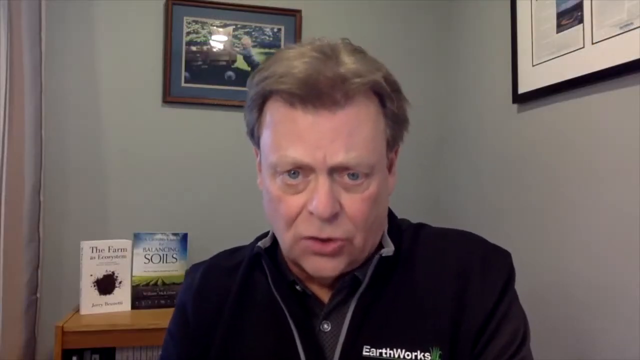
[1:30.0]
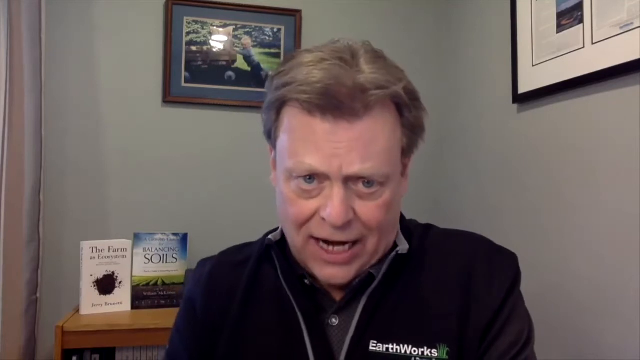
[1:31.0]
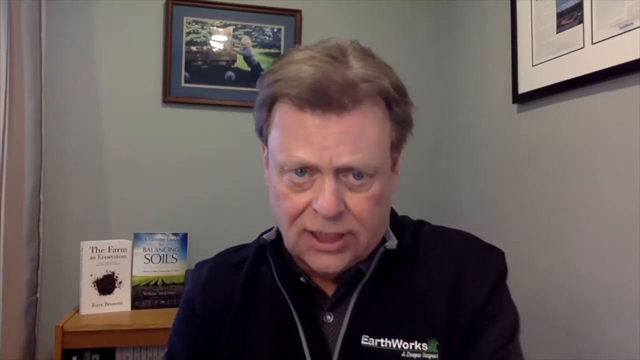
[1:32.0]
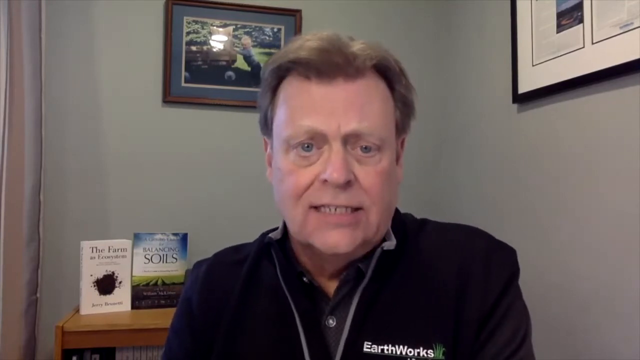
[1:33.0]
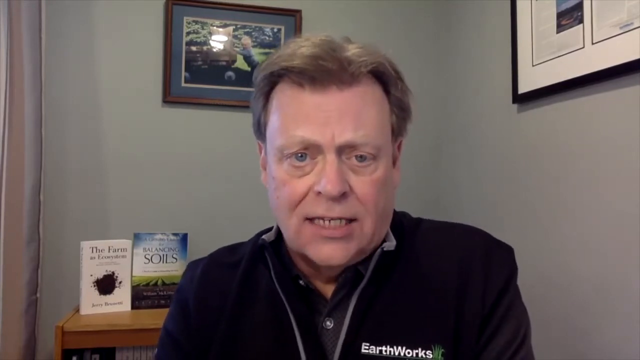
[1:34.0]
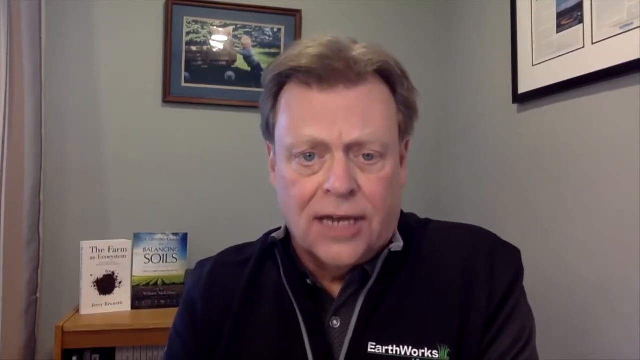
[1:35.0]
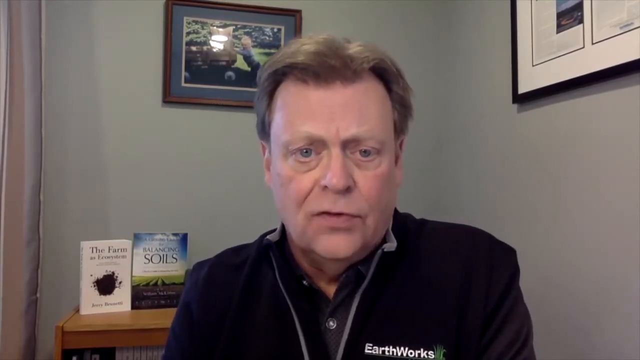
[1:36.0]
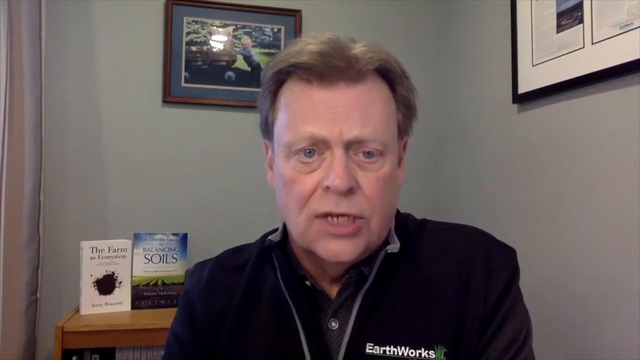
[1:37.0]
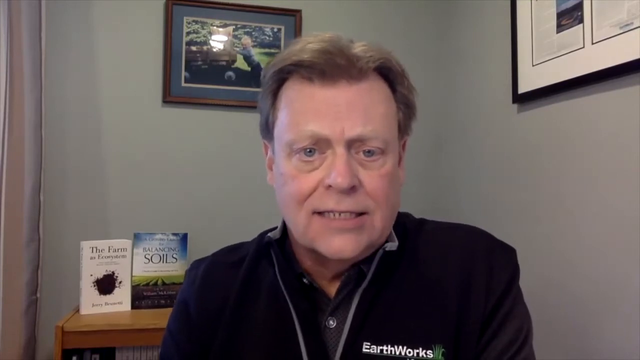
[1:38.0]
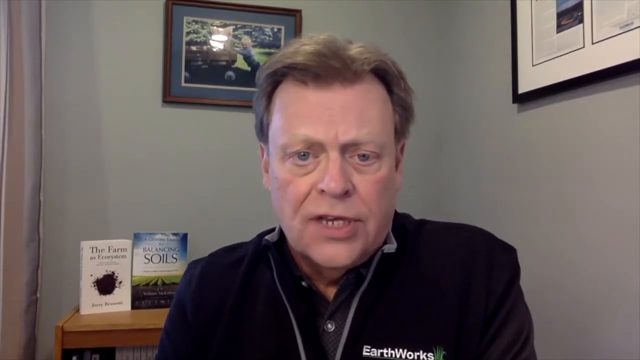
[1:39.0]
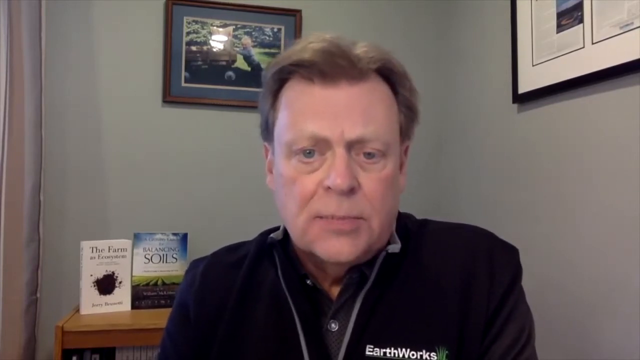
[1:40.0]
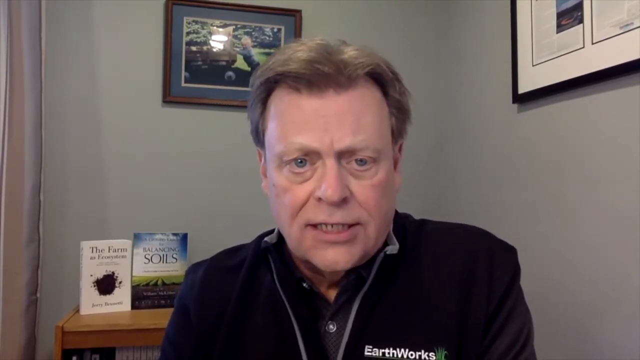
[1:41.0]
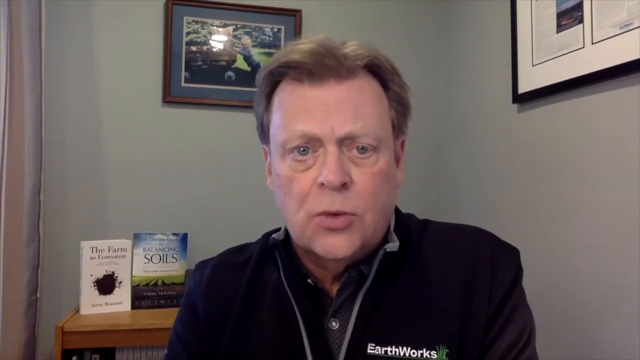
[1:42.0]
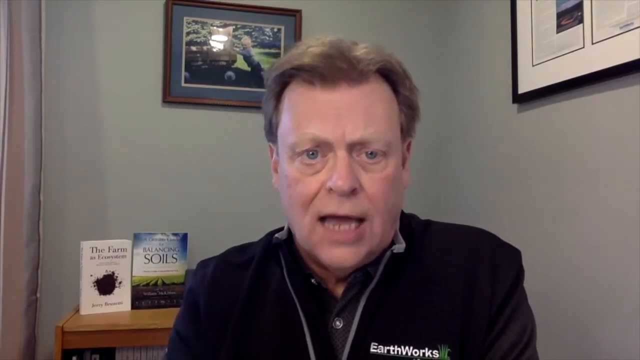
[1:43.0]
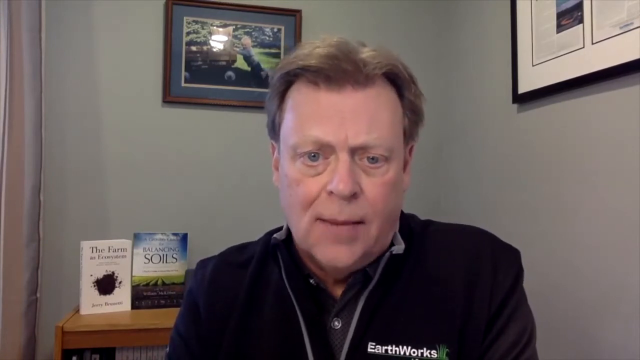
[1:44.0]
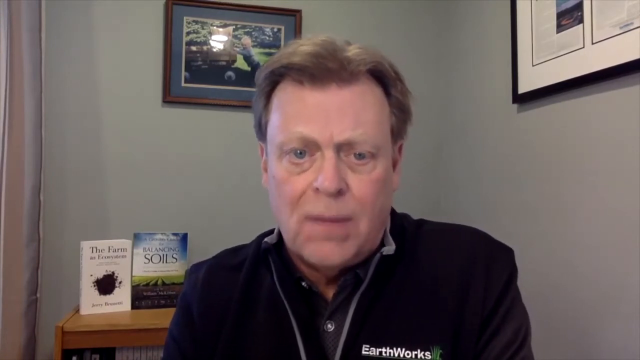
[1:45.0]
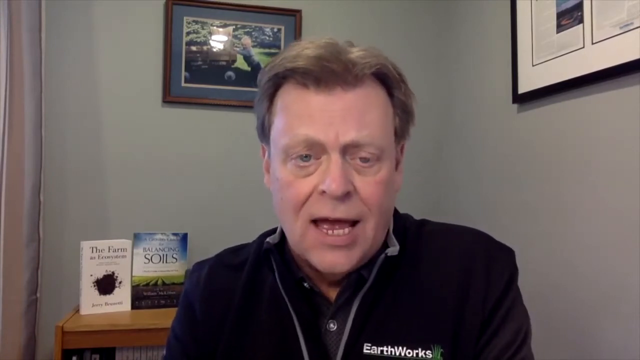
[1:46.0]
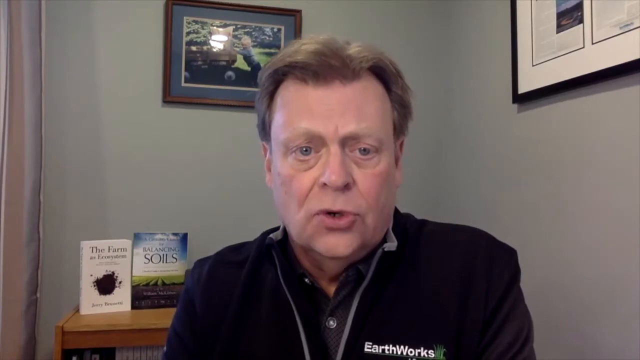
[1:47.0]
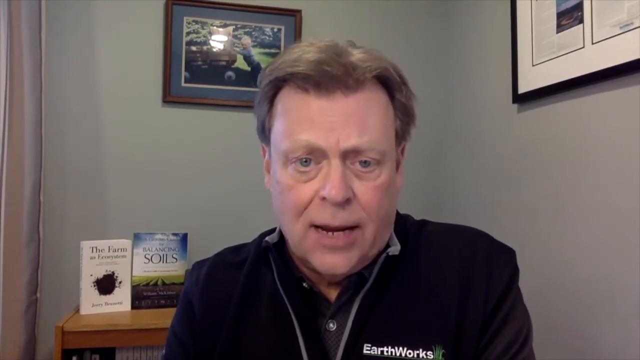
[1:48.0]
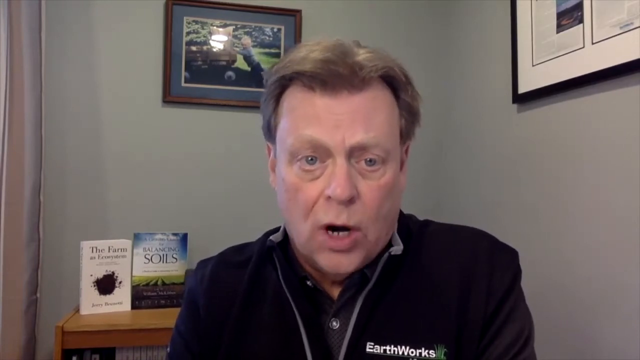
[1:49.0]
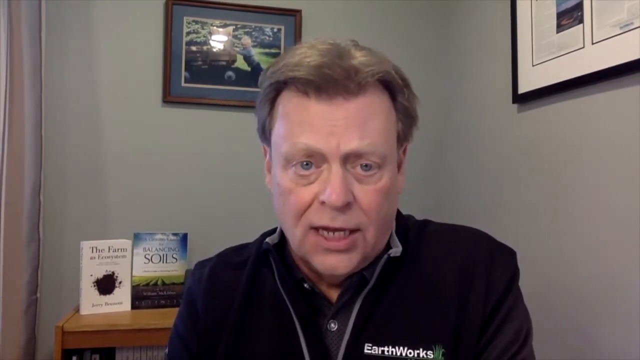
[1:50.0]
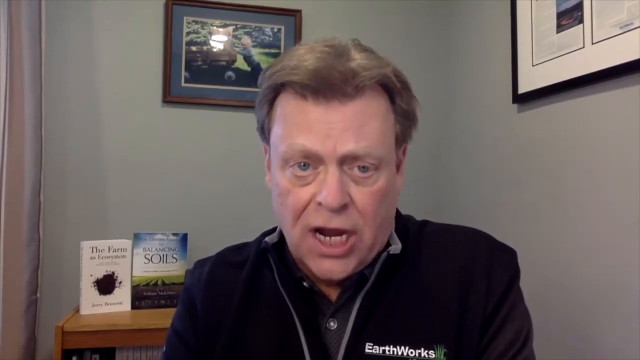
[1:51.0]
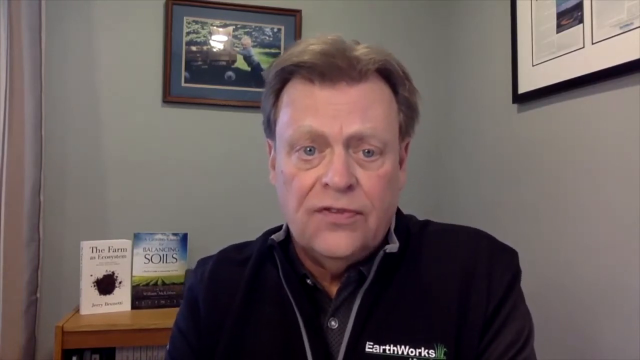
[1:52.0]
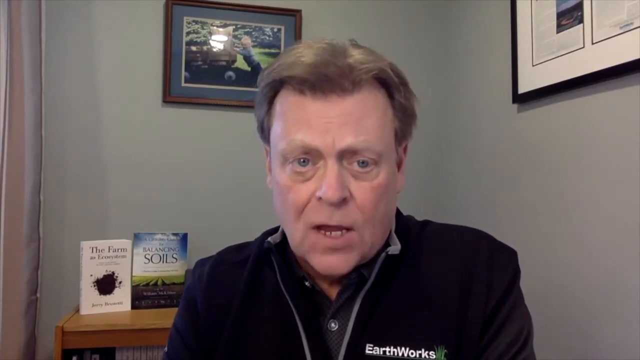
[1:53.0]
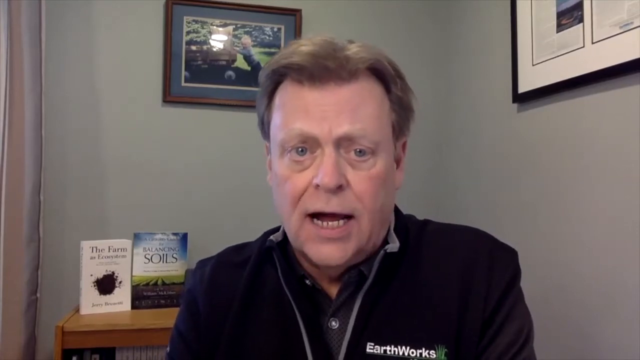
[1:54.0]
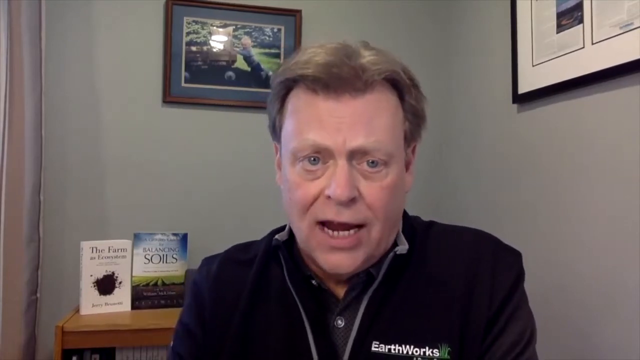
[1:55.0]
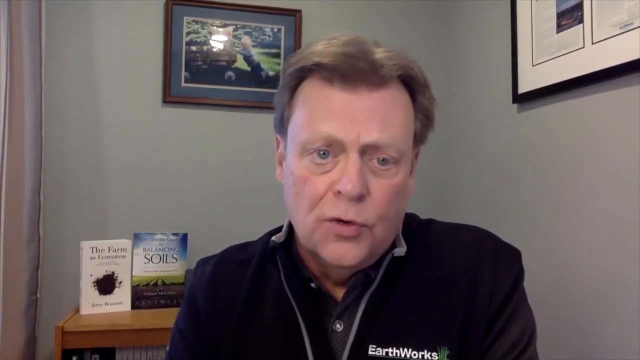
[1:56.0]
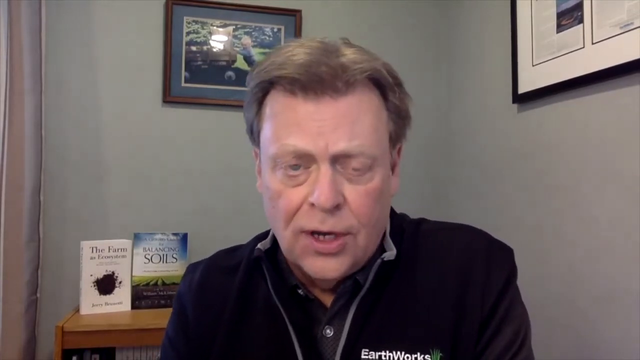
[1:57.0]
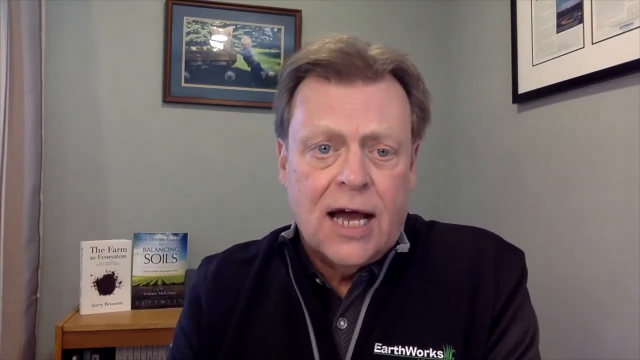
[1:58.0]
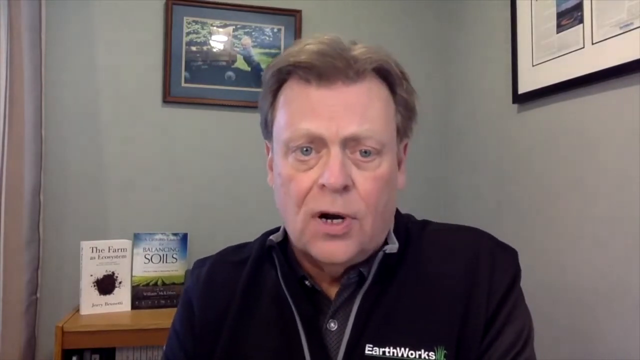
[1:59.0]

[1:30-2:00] Joel Simmons is in his office, speaking directly and rather intently to the camera while wearing his Earthworks shirt, with "Earthworks" stitched on the left. He uses his hands as he speaks and speaks very passionately. Behind him, over his left shoulder, are two books, apparently two of the books he has written, and there are a couple of pictures on the wall. One book looks like it is called "Balancing Soils," and the other title appears to be "The Farm Ecosystem." He continues speaking passionately as he looks into the camera.